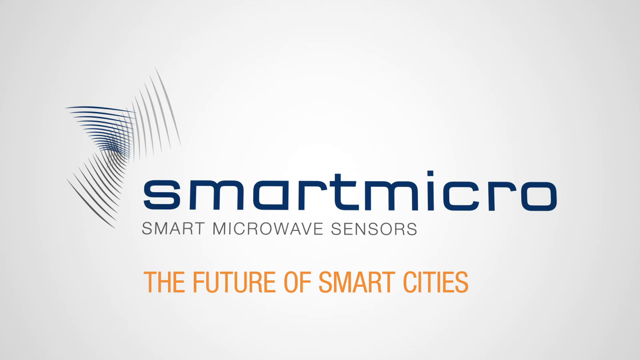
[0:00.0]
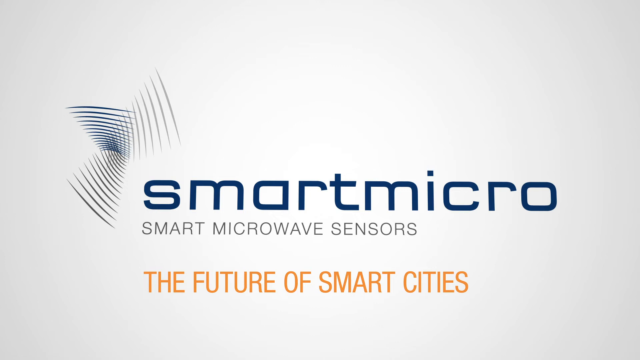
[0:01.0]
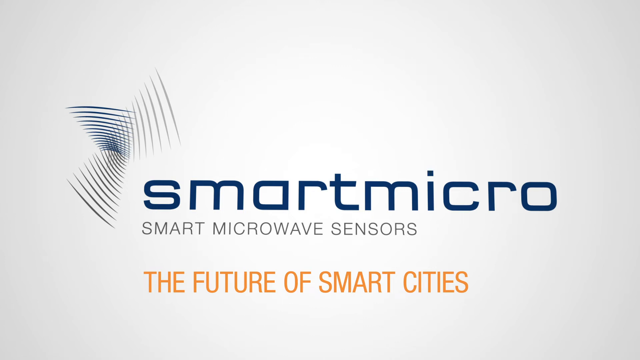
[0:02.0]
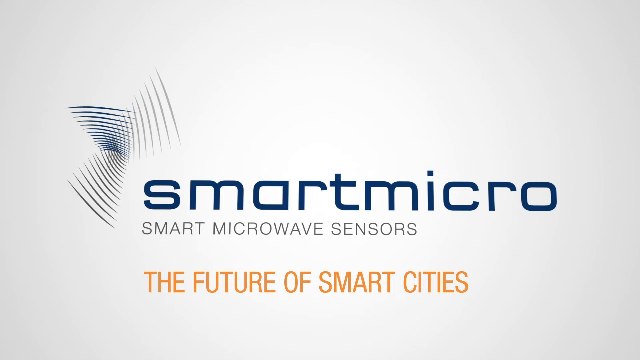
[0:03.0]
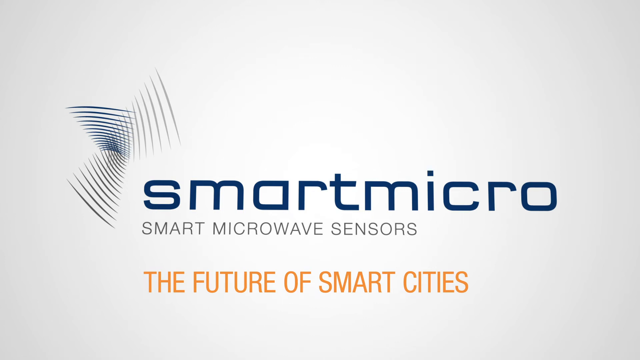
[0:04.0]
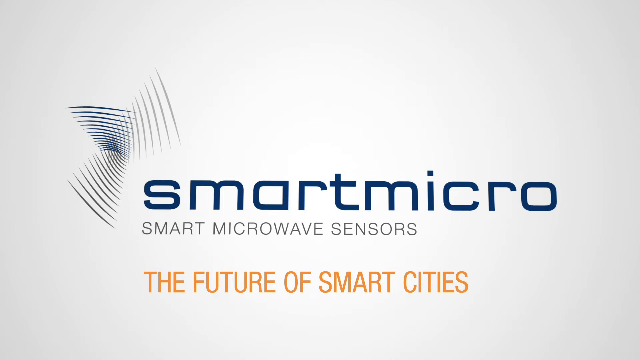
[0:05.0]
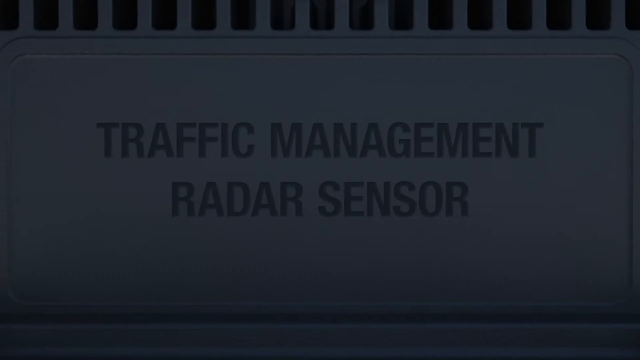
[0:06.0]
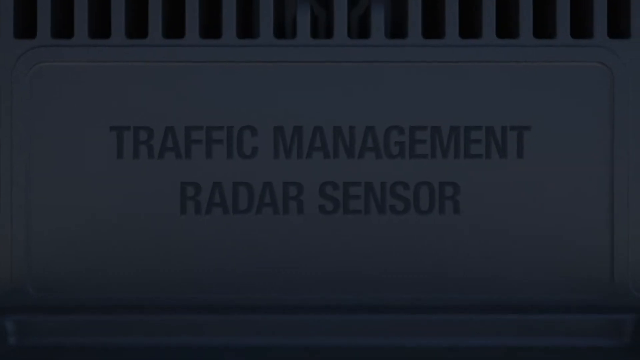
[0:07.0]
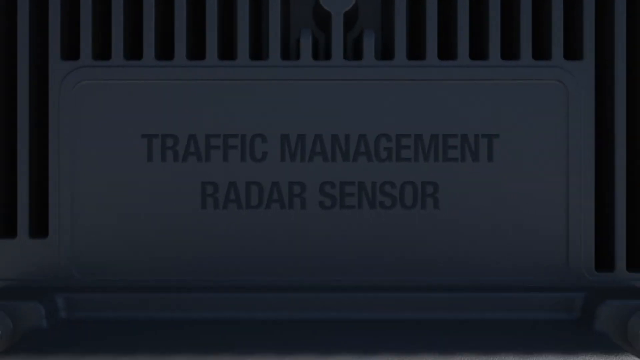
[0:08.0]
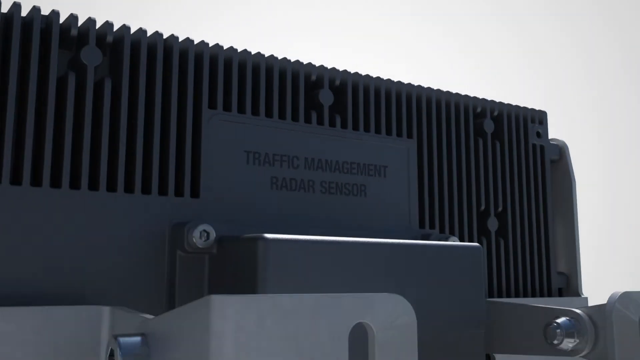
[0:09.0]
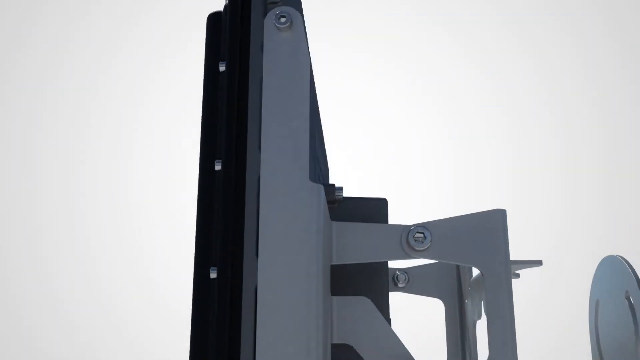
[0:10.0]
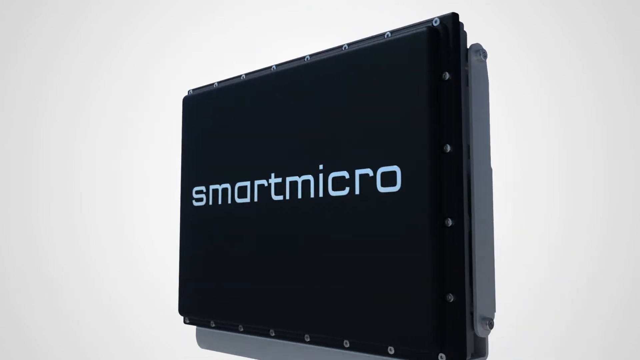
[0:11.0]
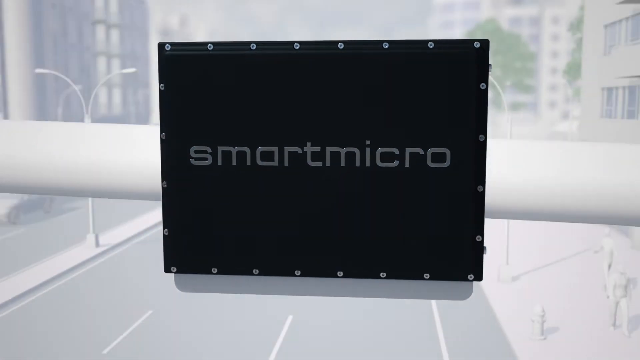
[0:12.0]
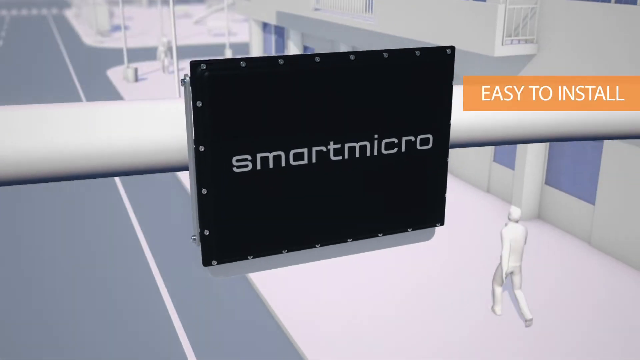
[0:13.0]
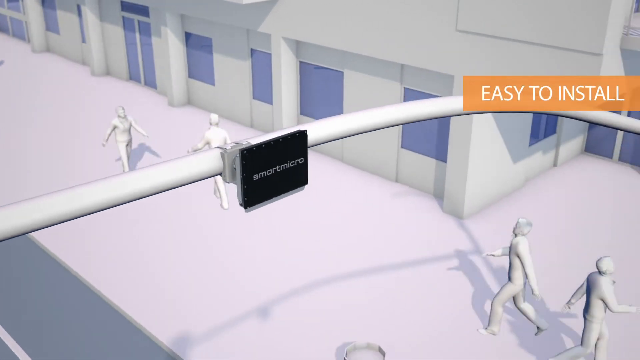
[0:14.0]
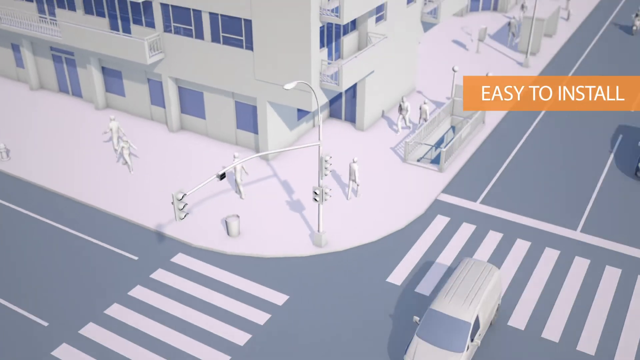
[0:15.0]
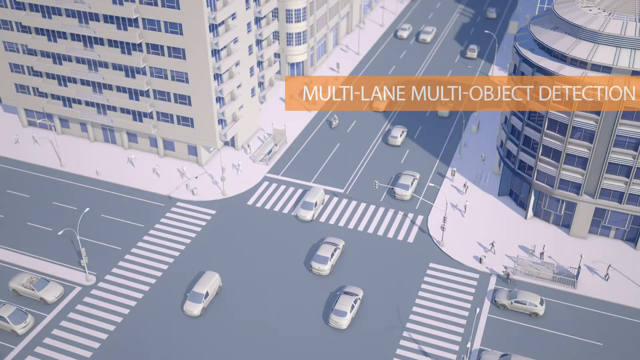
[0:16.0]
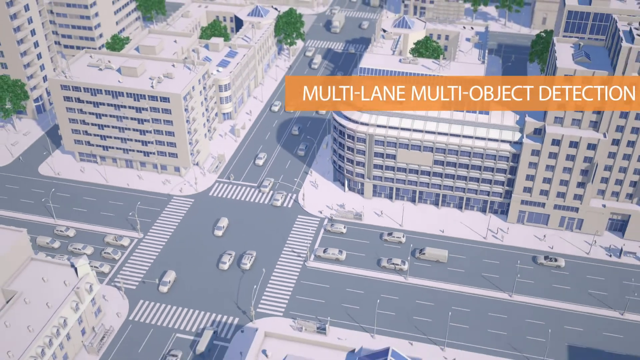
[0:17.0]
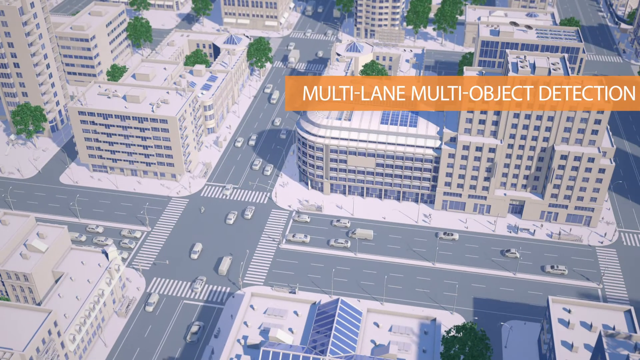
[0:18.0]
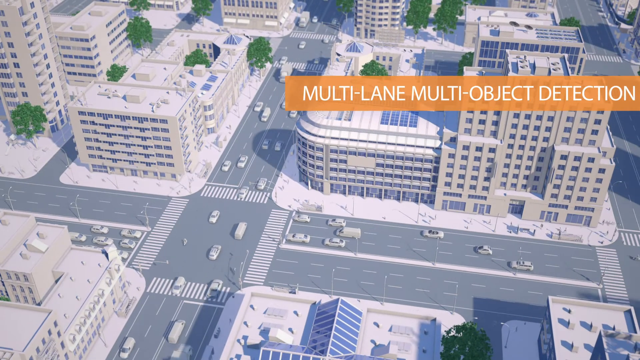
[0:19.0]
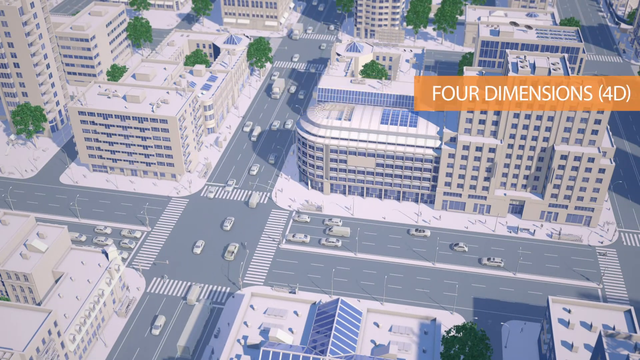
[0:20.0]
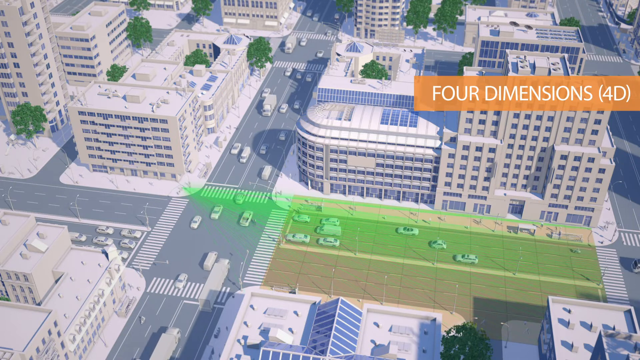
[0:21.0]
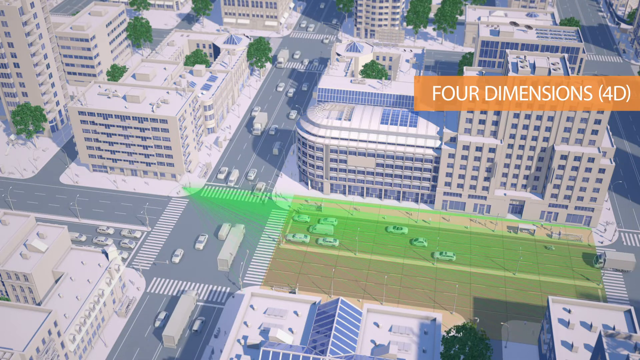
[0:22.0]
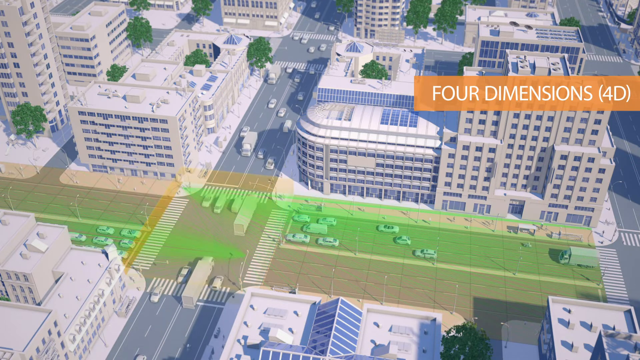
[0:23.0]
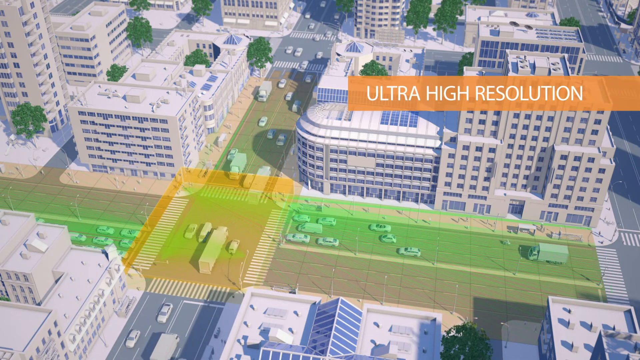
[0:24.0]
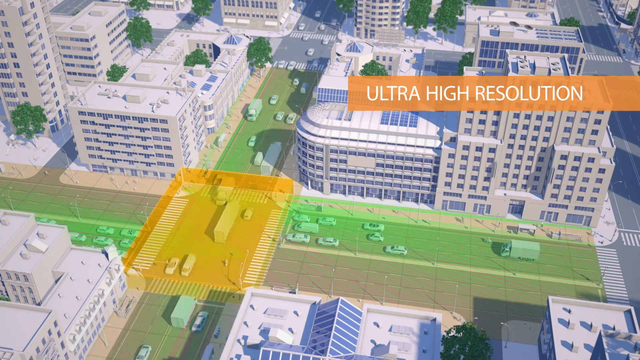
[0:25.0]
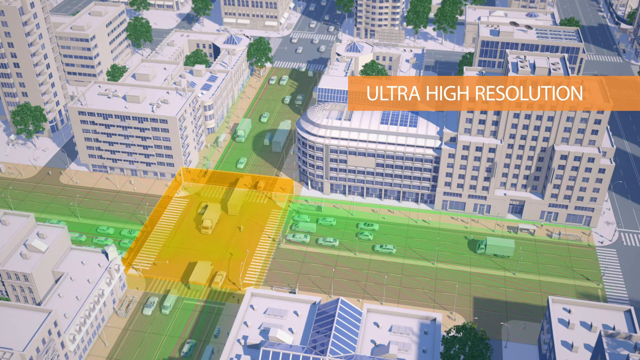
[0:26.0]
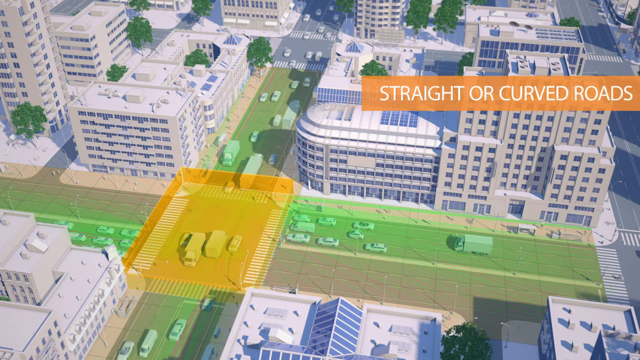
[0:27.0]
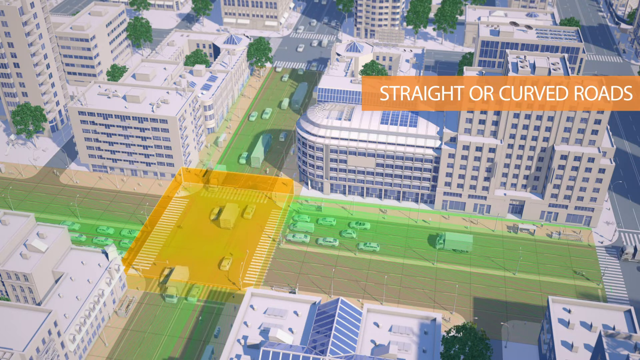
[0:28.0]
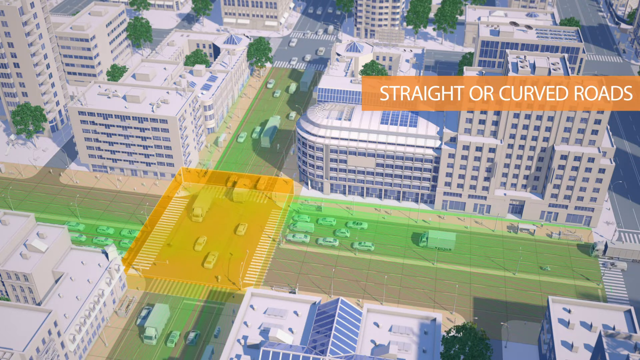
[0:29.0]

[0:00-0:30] Opening text reads "smart microwave sensors" and "future of smart cities," followed by "Traffic Management Radar Sensor." A microchip-like device is shown, with phrases such as "Easy to install," "Multi-lane, multi-object detection" and "4D." The device is apparently meant to be placed by traffic lights. A picture or diagram of a city follows, with multiple buildings and a lot of traffic on the street, and graphics apparently illustrating different ways the sensor can detect things.